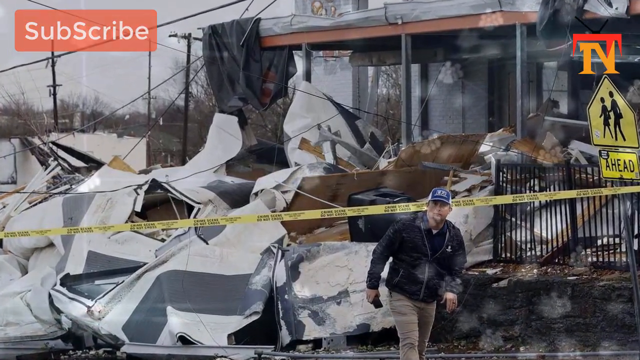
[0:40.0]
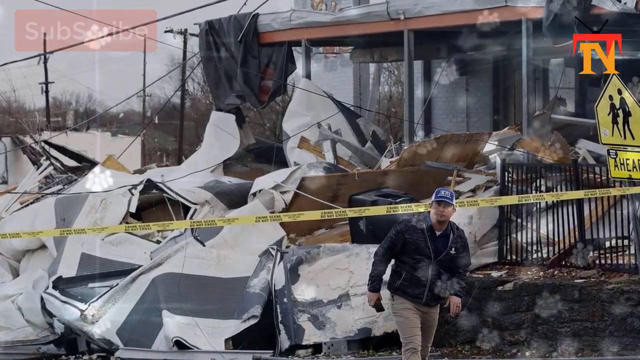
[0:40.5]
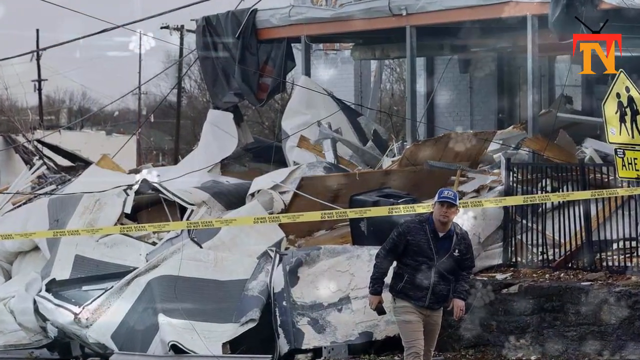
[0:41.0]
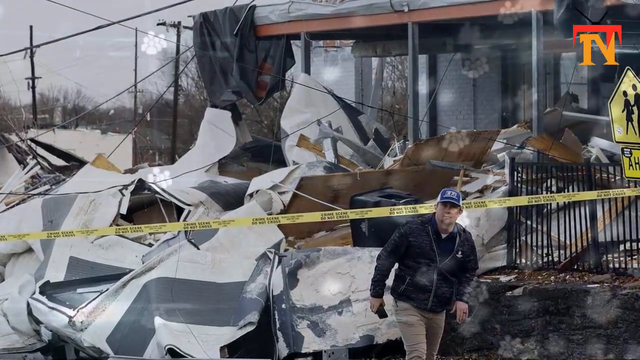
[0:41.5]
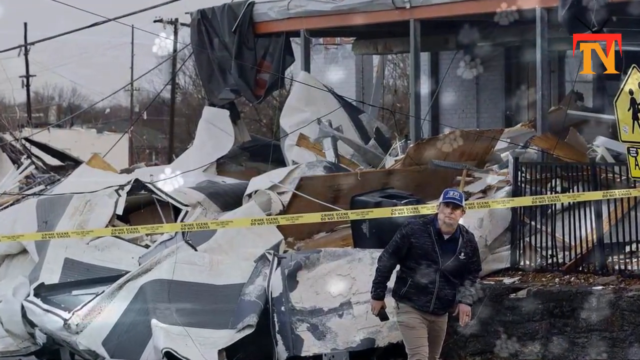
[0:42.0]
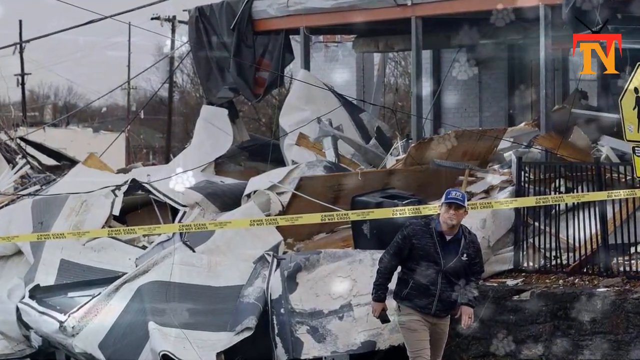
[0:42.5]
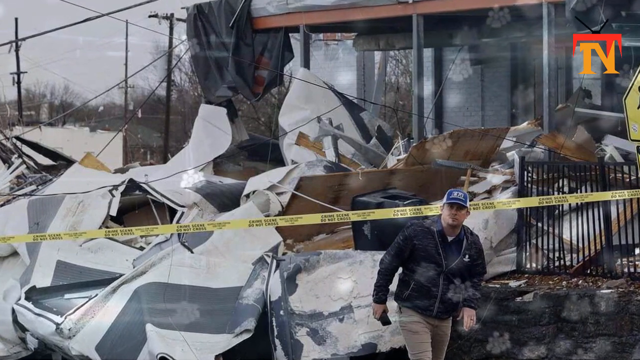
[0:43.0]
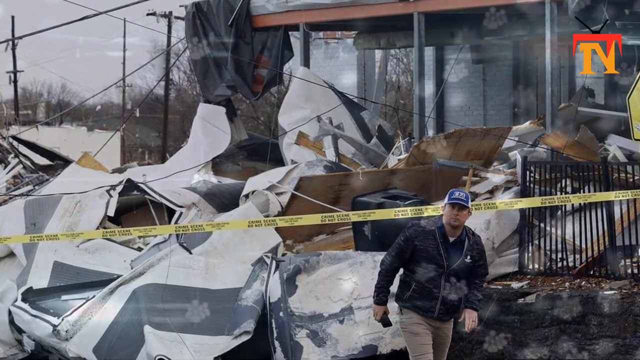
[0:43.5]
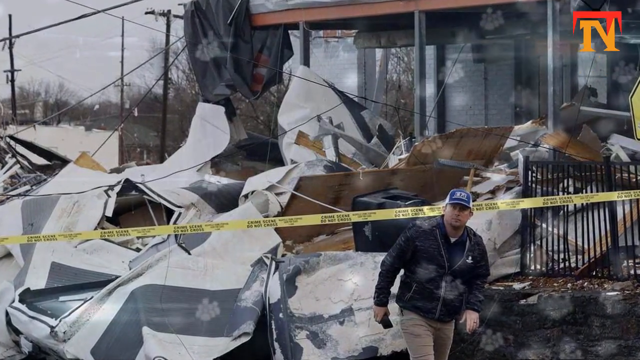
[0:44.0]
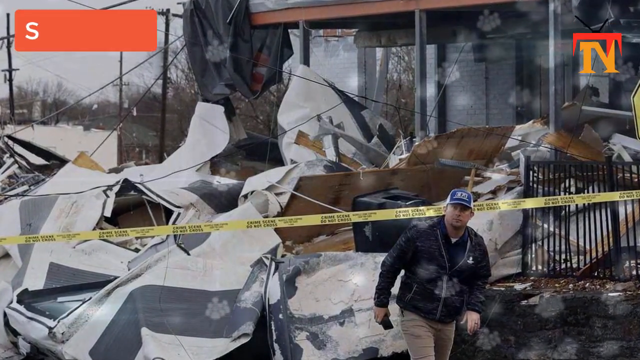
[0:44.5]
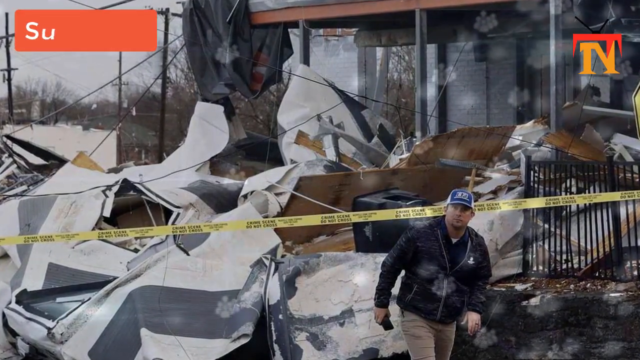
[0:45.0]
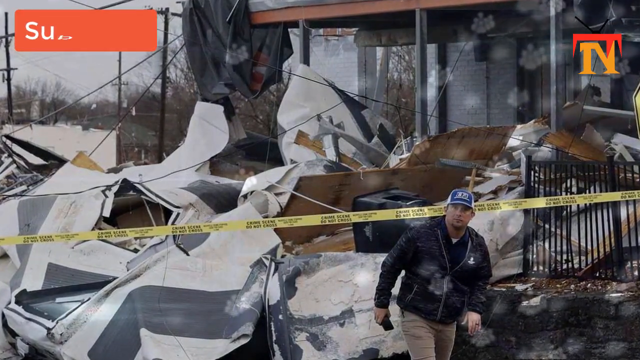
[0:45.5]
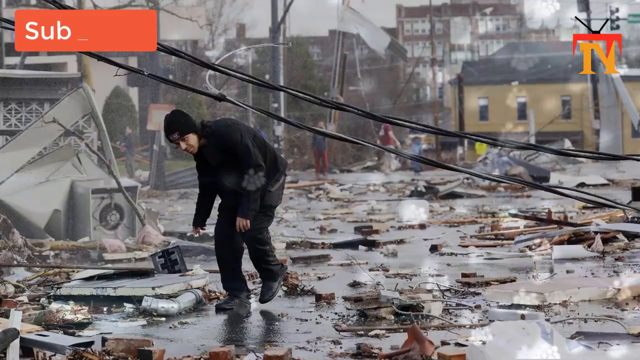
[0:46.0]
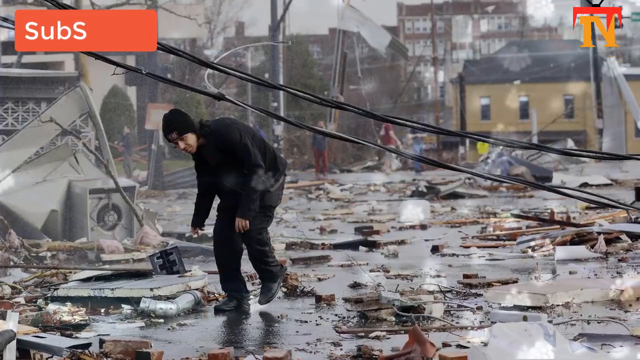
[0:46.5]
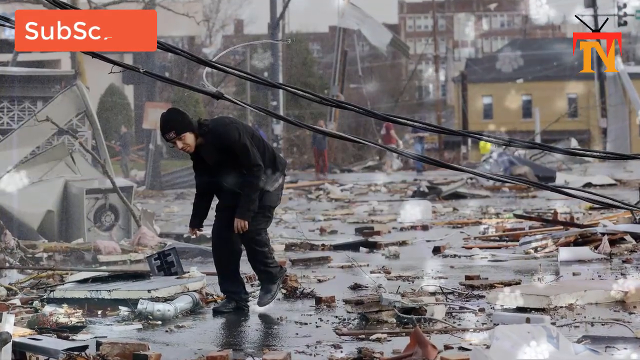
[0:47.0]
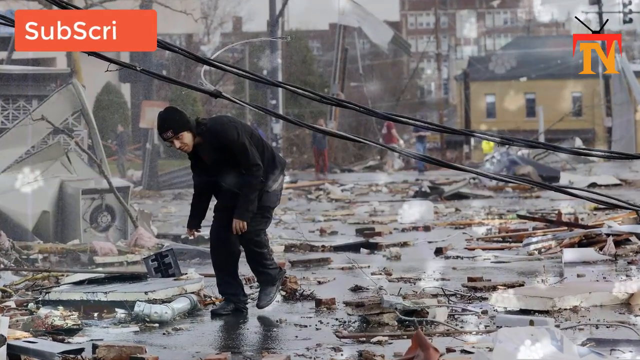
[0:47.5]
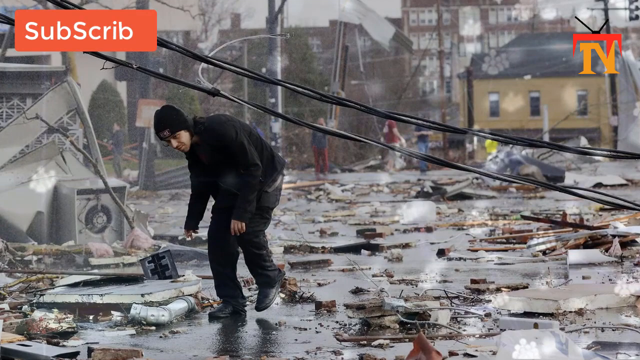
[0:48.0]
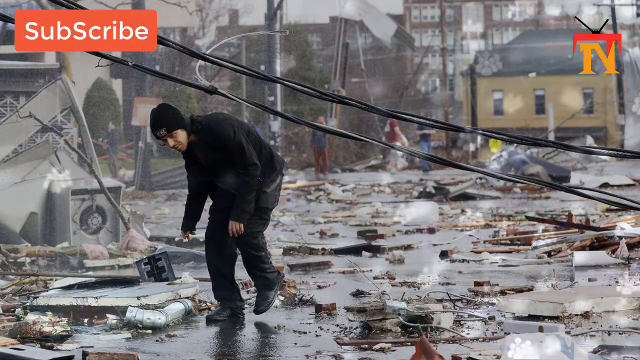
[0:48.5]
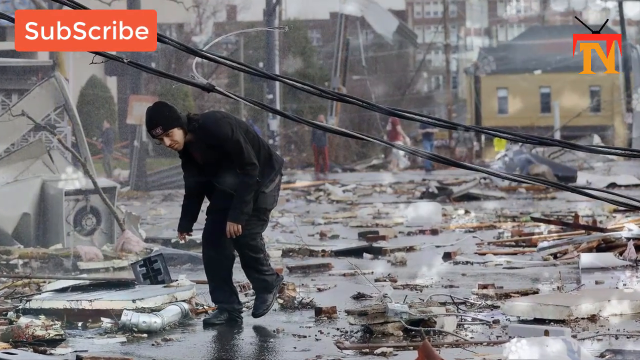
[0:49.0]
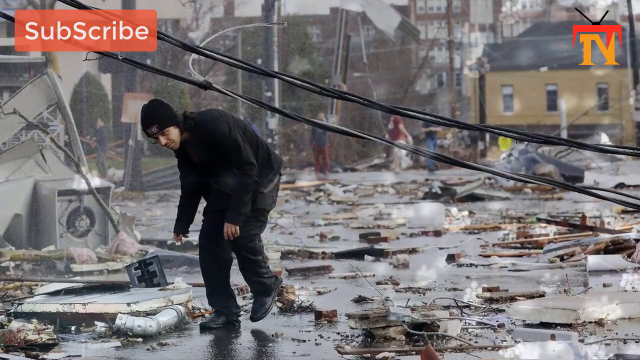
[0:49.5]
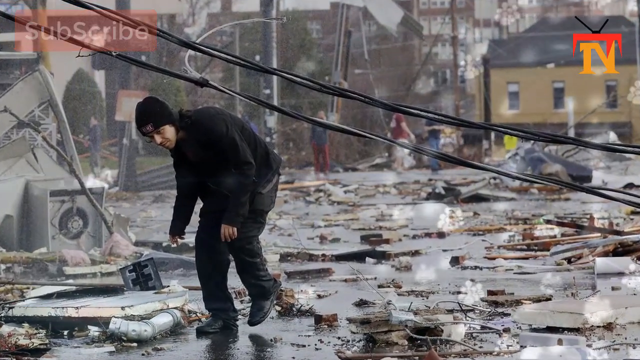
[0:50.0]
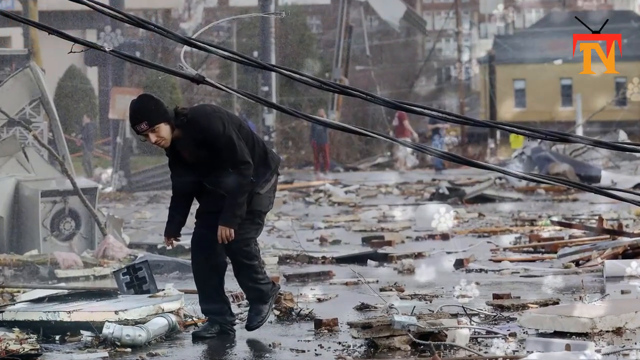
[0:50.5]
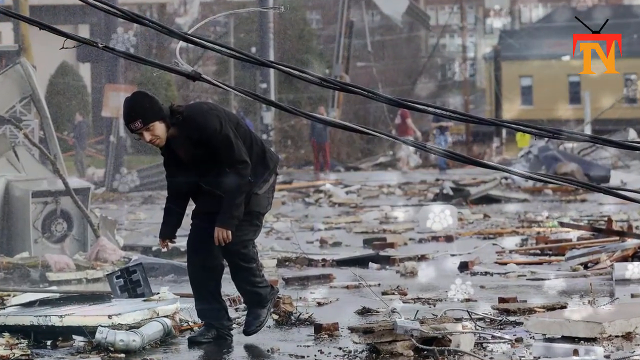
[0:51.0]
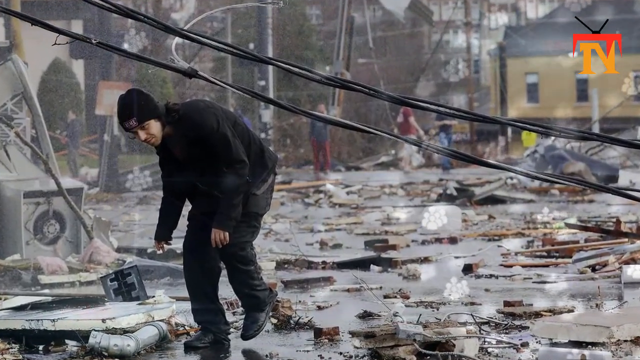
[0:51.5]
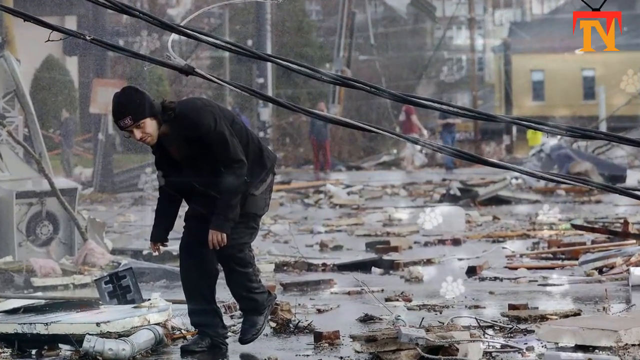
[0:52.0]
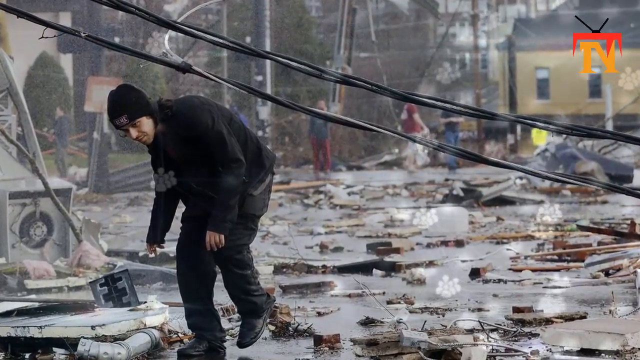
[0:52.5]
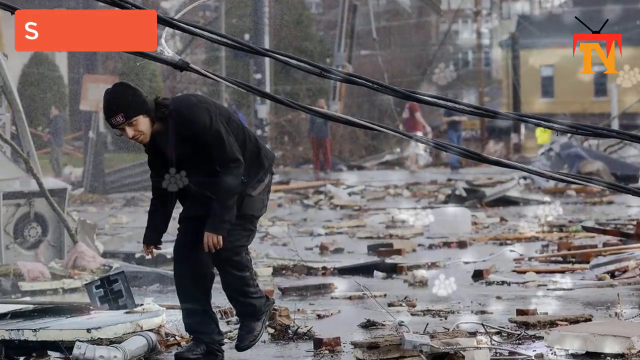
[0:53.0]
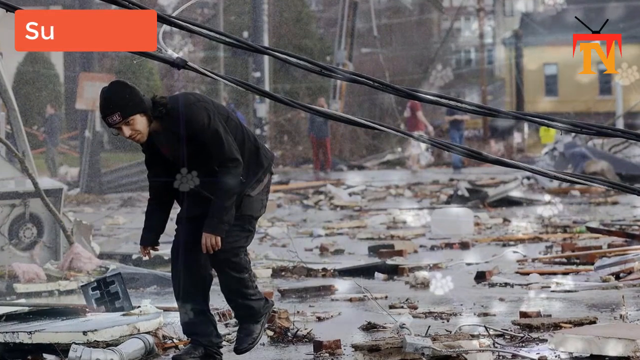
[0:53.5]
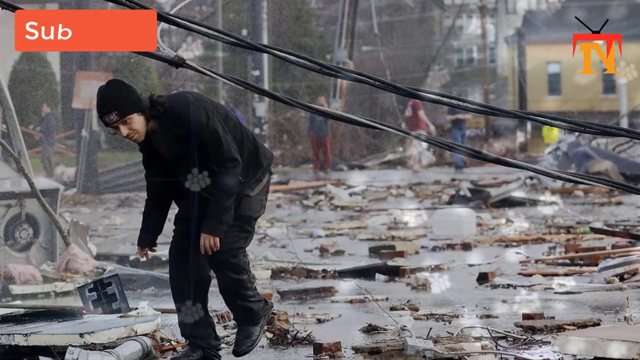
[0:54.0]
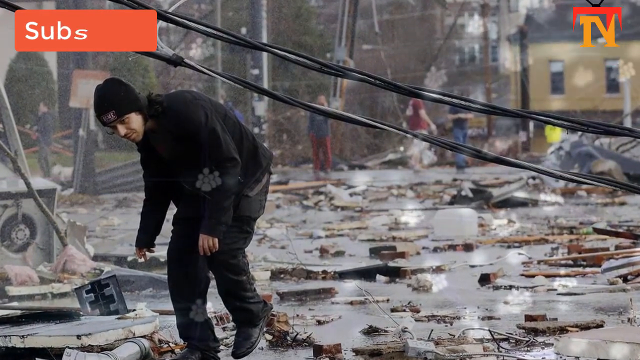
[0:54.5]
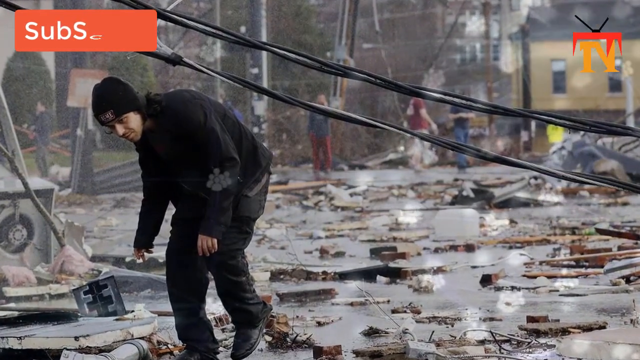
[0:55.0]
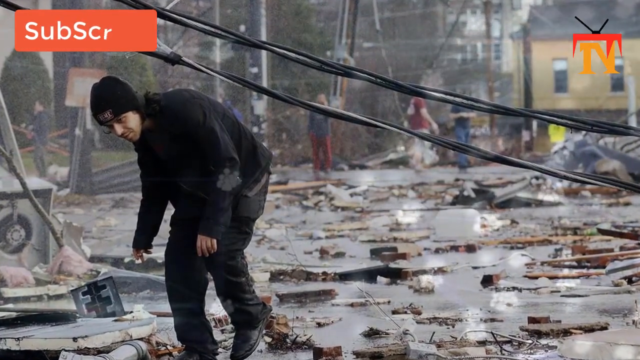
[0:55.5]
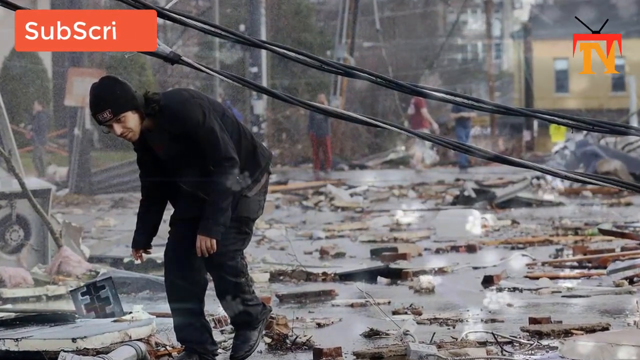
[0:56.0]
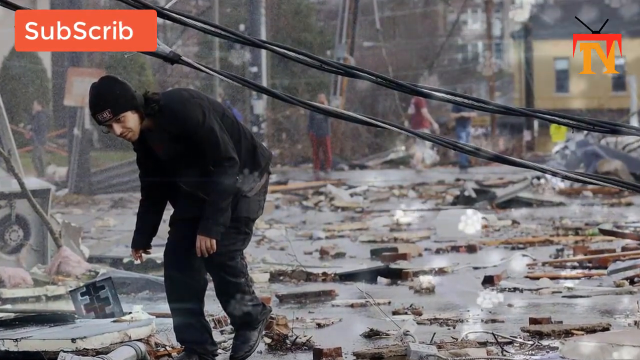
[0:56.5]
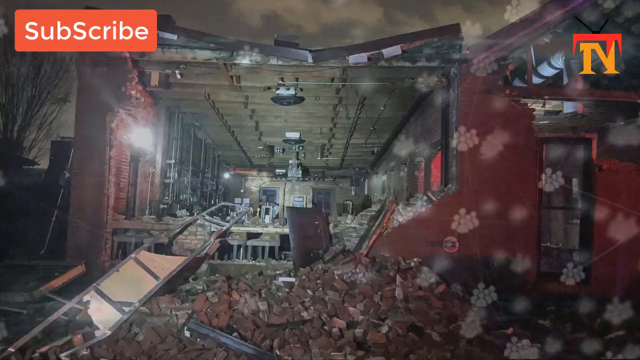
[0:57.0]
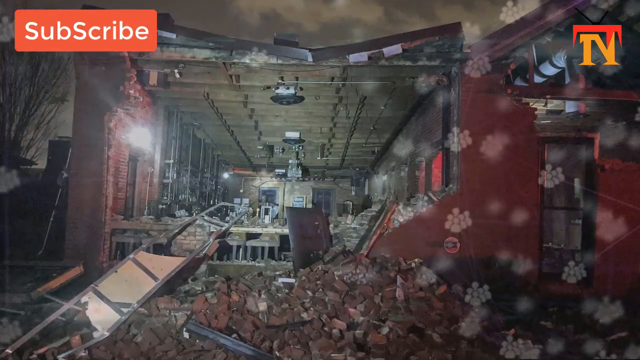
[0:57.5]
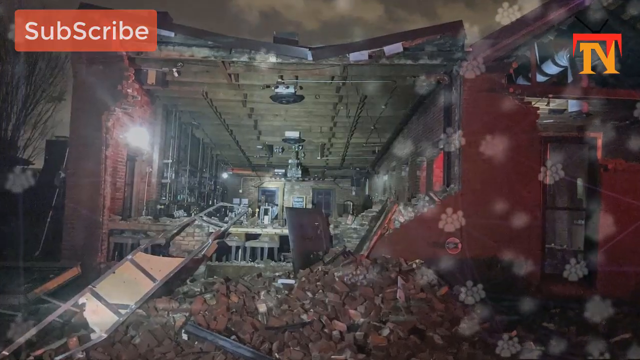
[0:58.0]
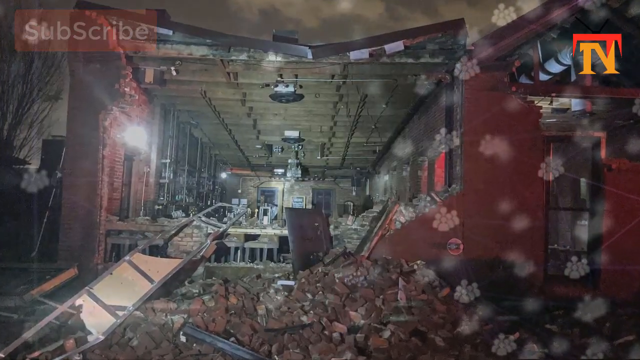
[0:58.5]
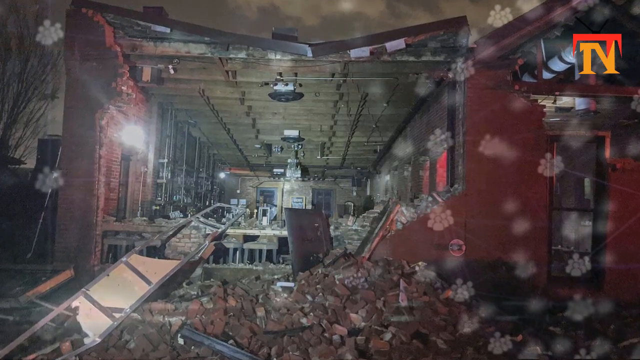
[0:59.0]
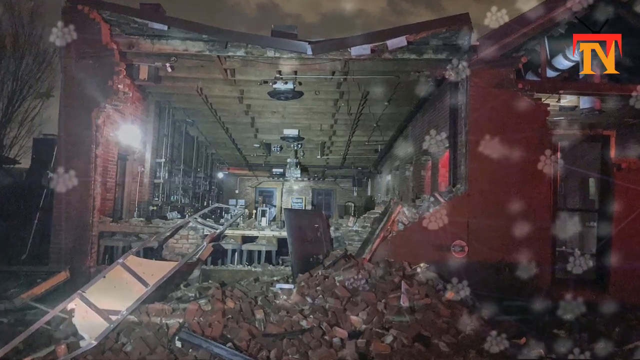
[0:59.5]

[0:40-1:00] A man in the center of the screen walks toward the right-hand side and is seen standing in front of caution tape that comes from off-screen. Wreckage fills the entire background. A crossing sign on the right-hand side is slightly bent. Wreckage covers all of the visible ground in front of building pillars at the top of the screen. The scene changes to a middle-aged man bending over some bent-over power lines. He is standing on a street, and a couple of people in sweatshirts and sweatpants stand far off in the distance amid wreckage spilled across the entire street. There is wreckage as far as the eye can see, the weather looks gloomy, gray and rainy, and the pavement looks wet. The camera slowly zooms toward the center of the image.